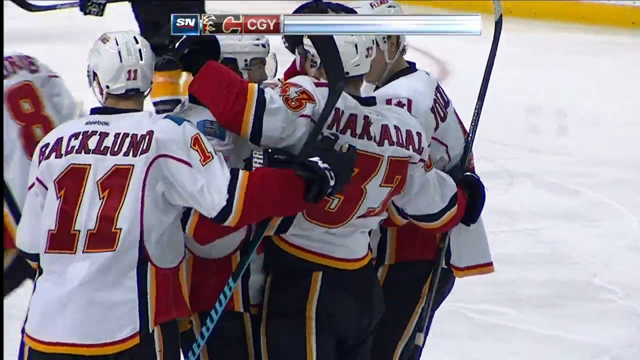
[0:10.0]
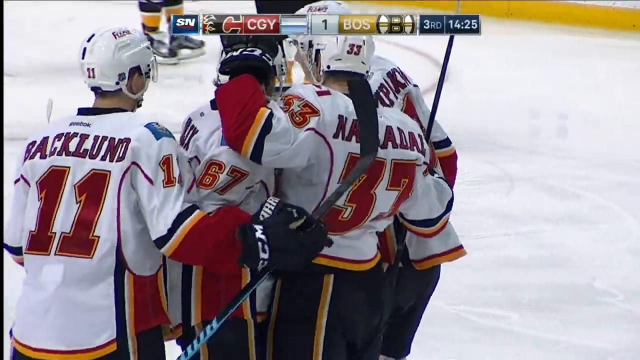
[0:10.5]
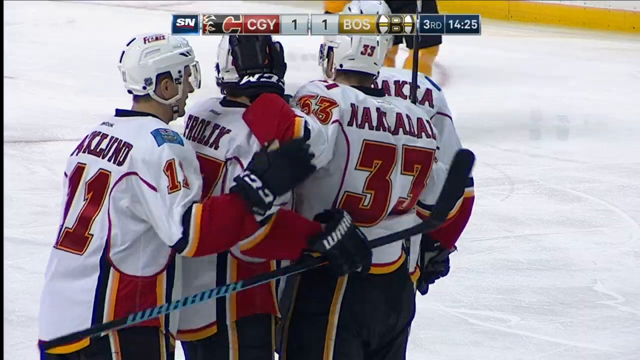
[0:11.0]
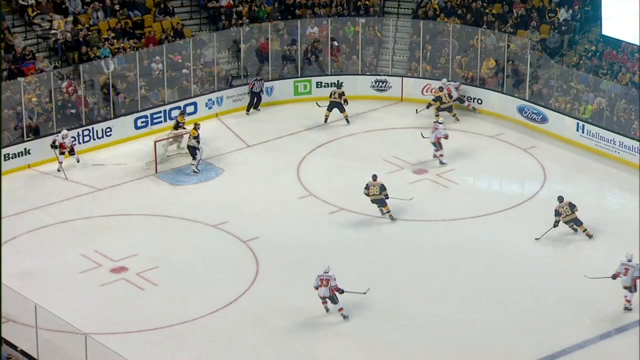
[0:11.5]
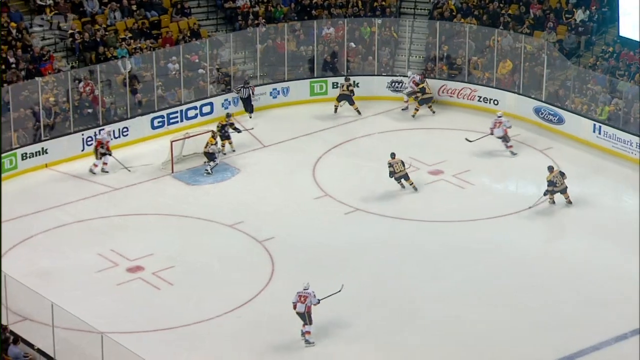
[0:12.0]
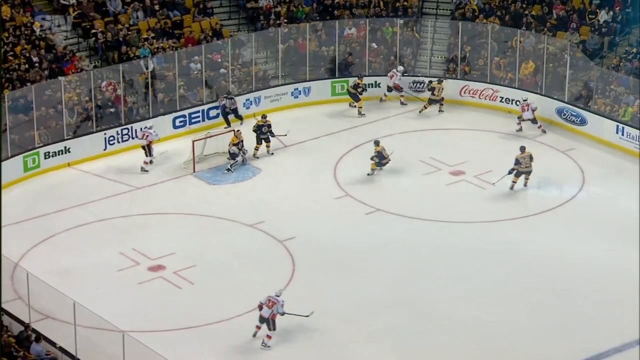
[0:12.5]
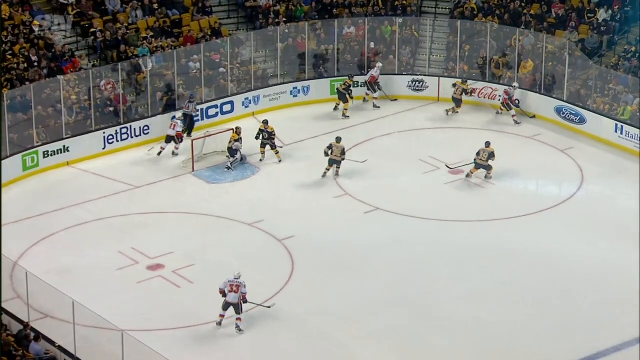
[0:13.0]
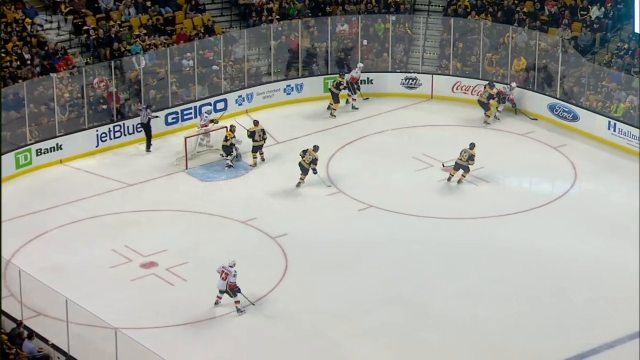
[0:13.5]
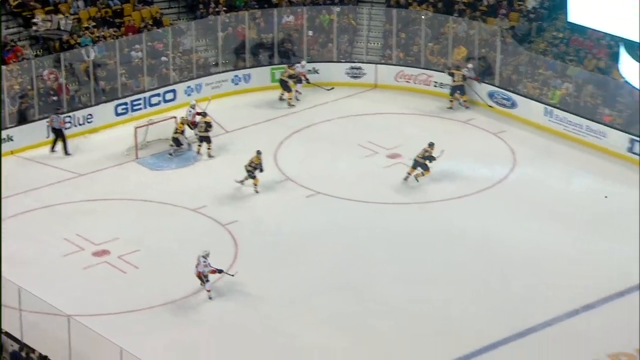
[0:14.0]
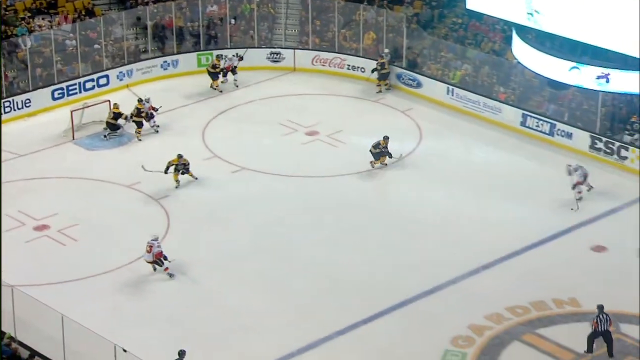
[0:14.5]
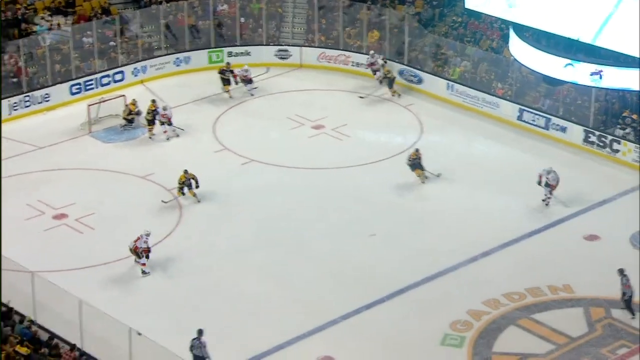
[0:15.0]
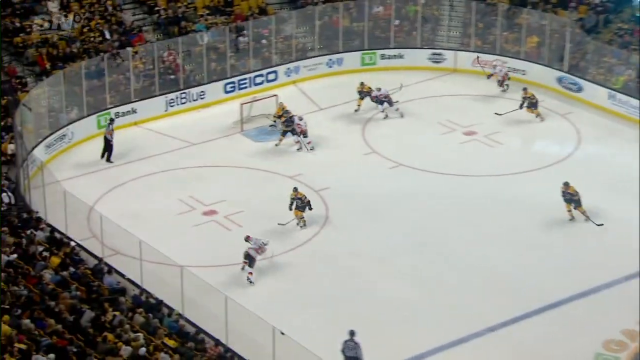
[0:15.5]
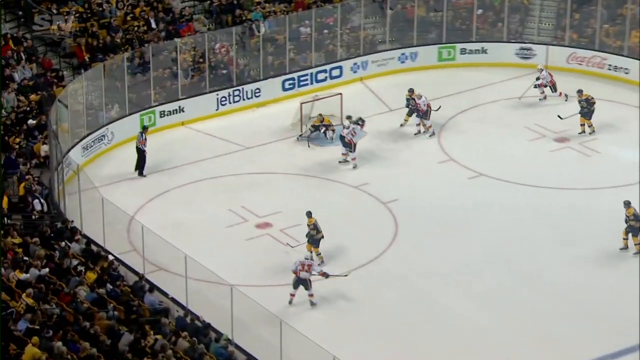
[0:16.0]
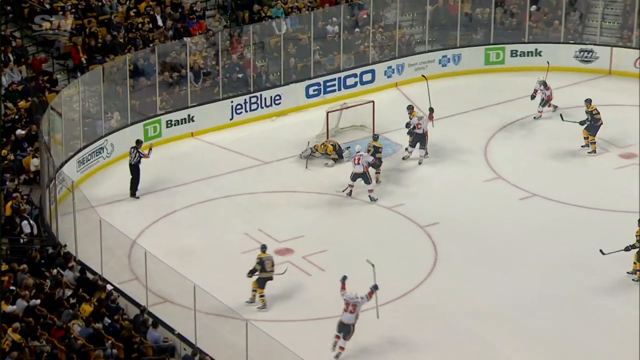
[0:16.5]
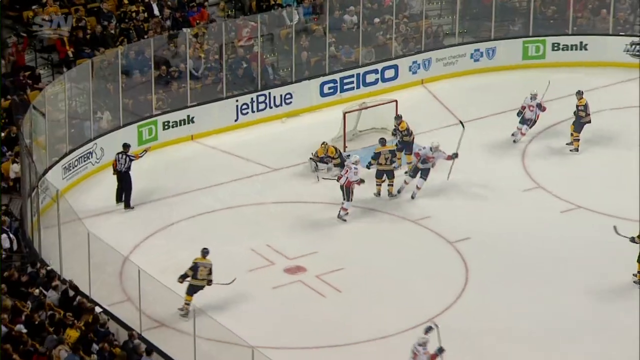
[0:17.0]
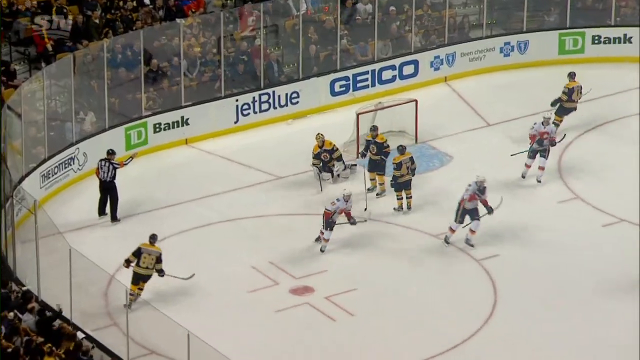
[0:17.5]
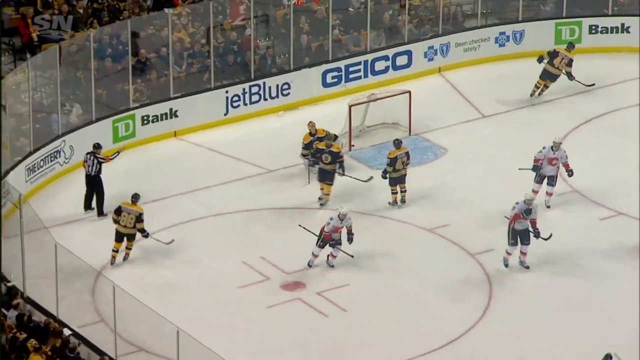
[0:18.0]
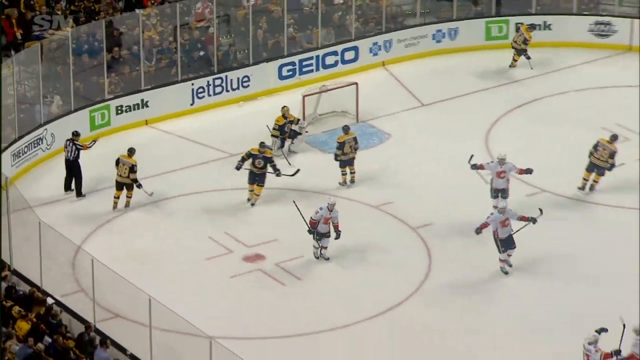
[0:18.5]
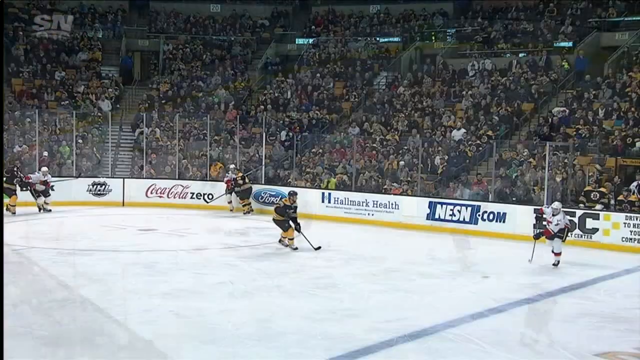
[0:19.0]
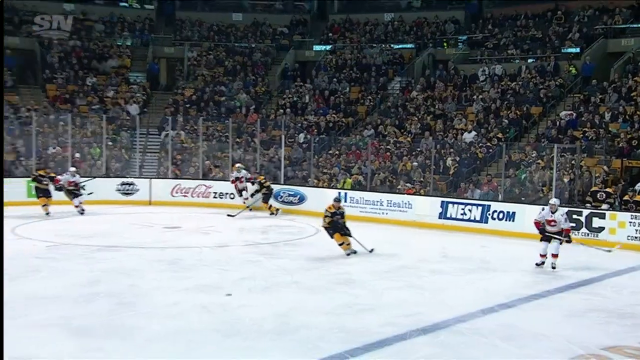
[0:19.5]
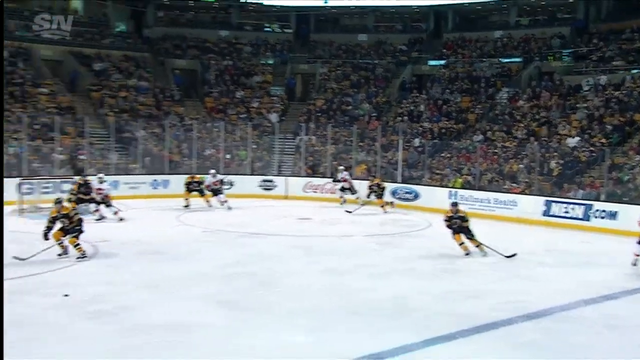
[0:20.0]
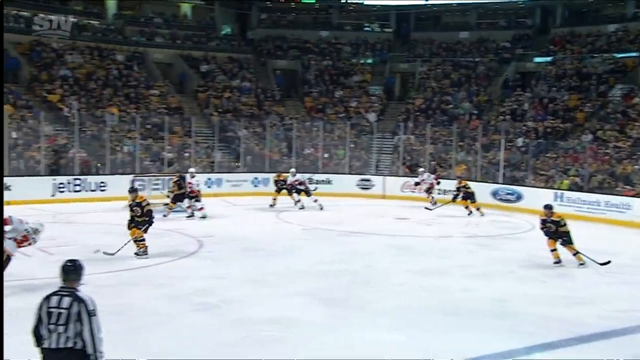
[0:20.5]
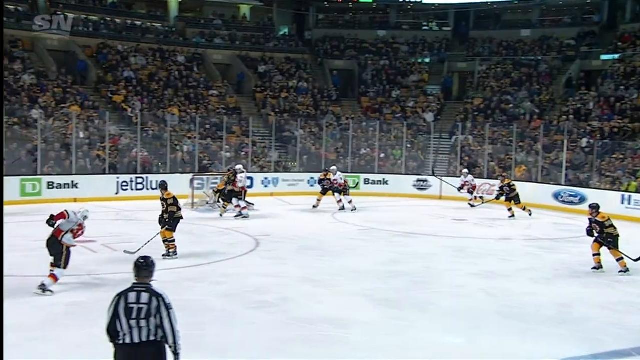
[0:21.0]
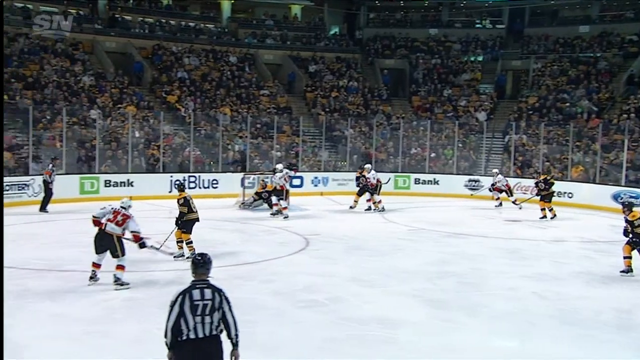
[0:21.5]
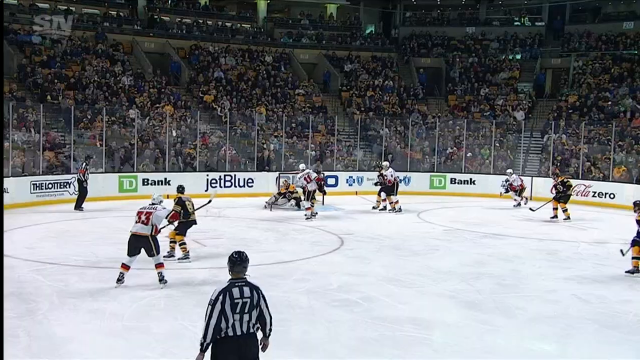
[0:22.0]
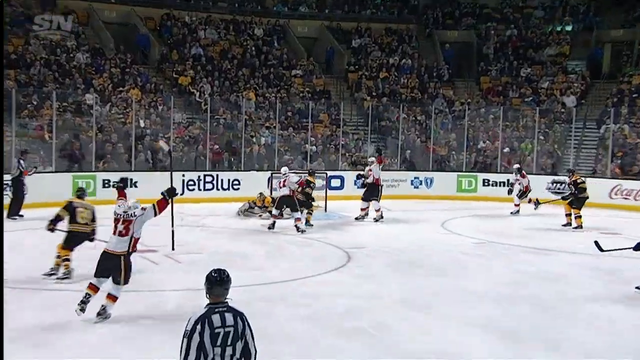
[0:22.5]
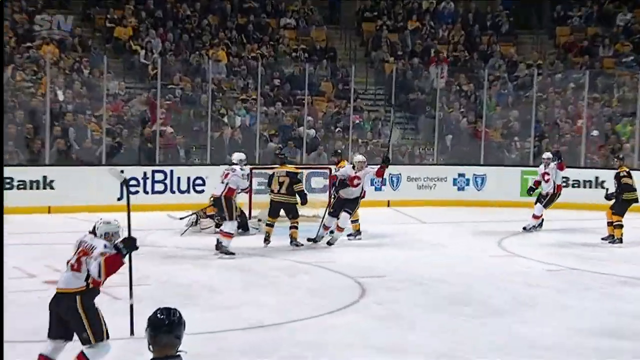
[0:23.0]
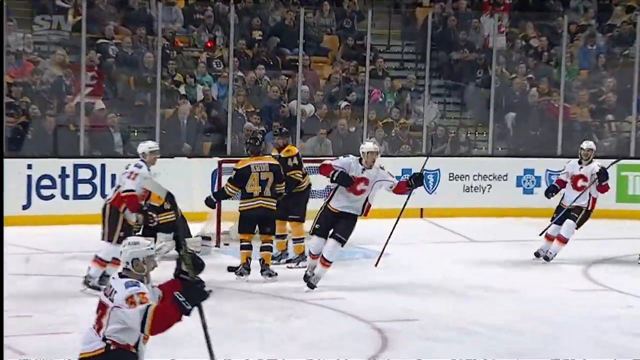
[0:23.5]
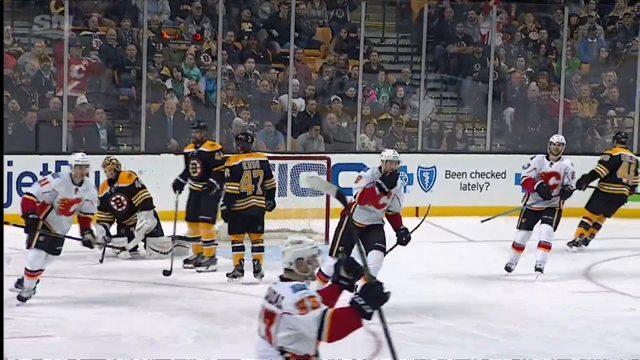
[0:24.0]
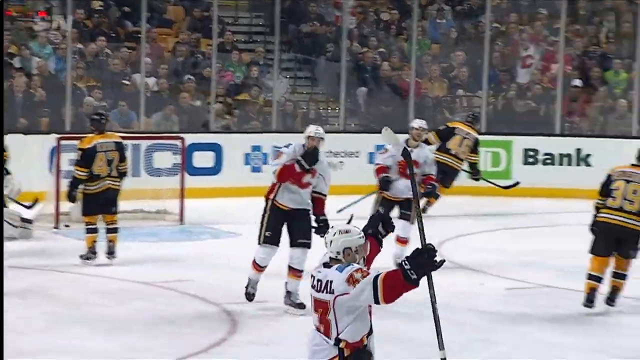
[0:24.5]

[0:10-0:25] The hockey game between Calgary and Boston continues, with Boston as the home team. The score is now 1 to 1, all tied up, in the third period with just over 14 minutes left.